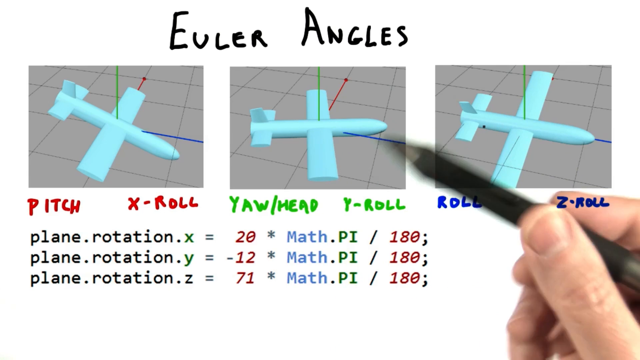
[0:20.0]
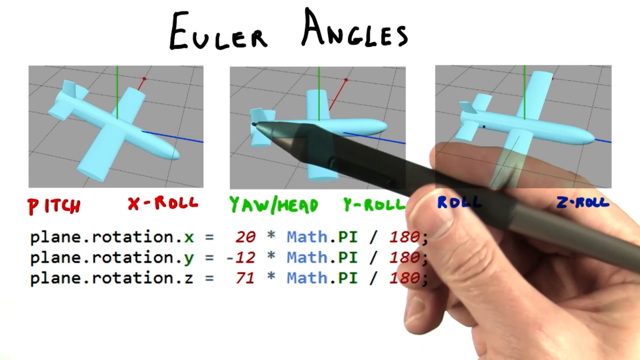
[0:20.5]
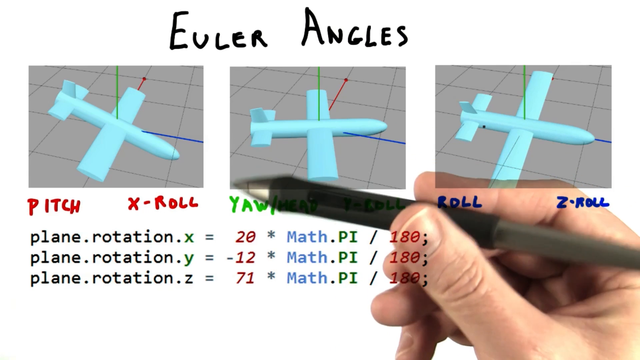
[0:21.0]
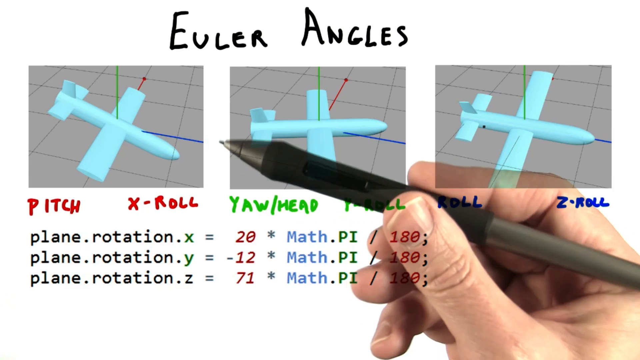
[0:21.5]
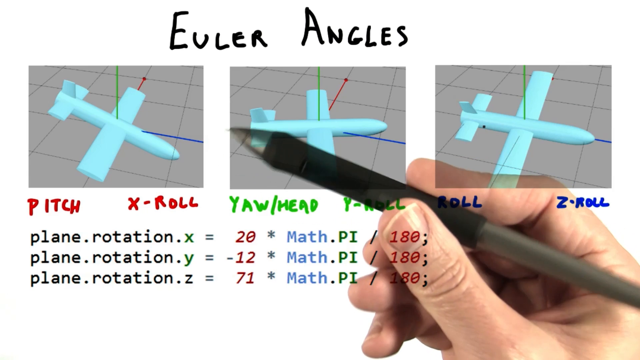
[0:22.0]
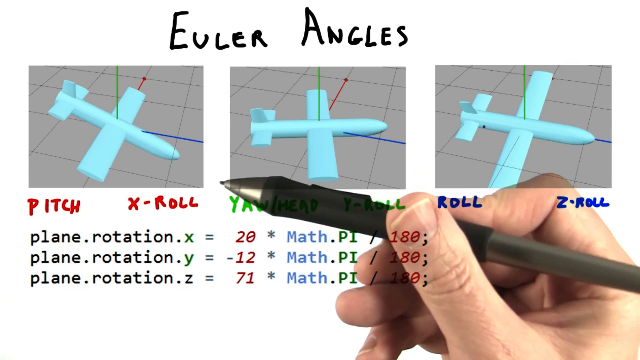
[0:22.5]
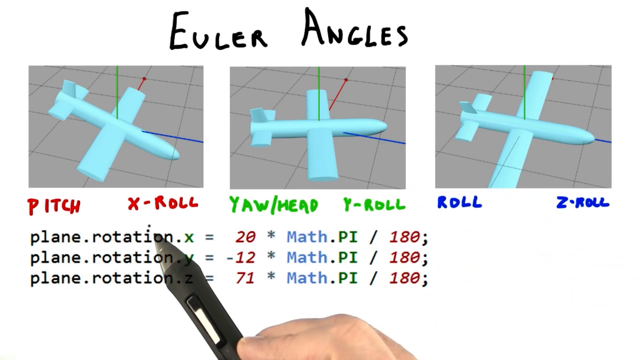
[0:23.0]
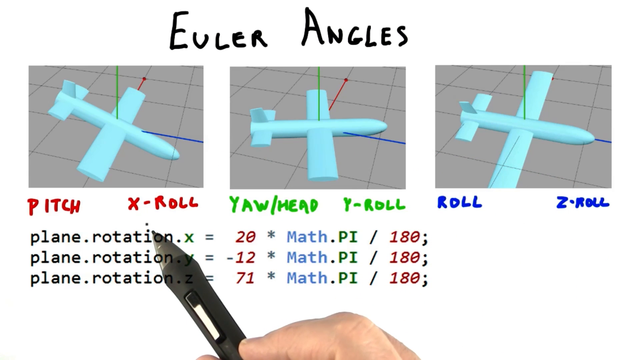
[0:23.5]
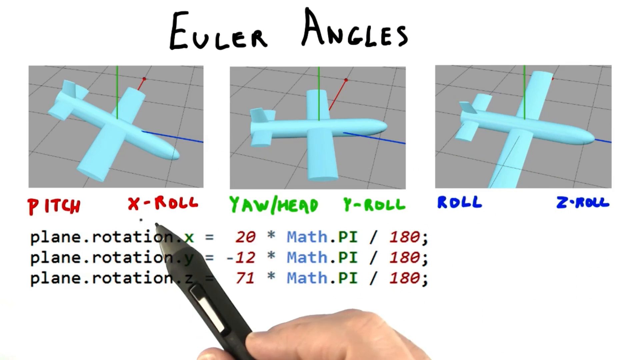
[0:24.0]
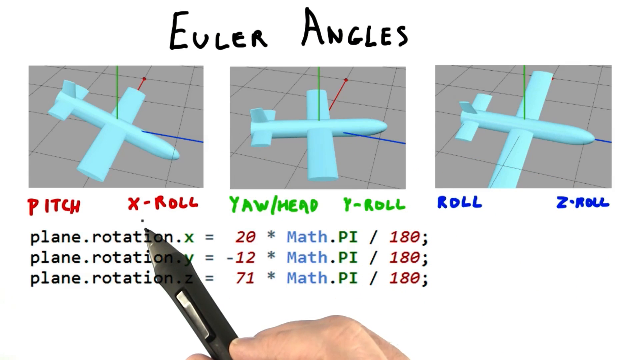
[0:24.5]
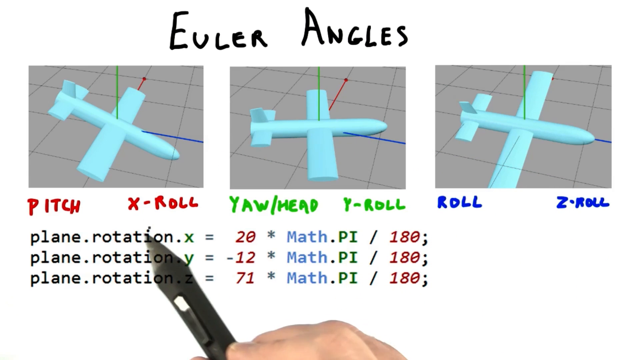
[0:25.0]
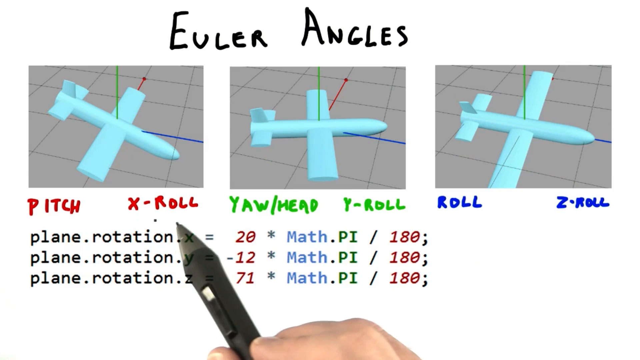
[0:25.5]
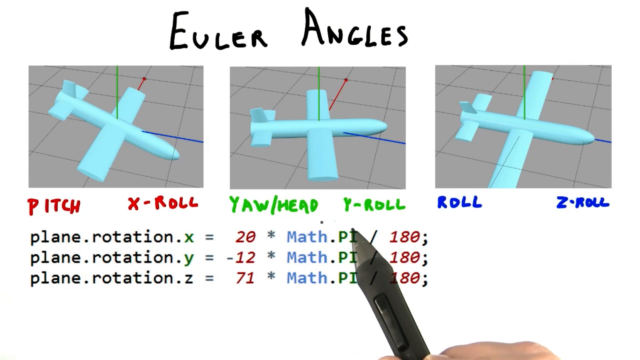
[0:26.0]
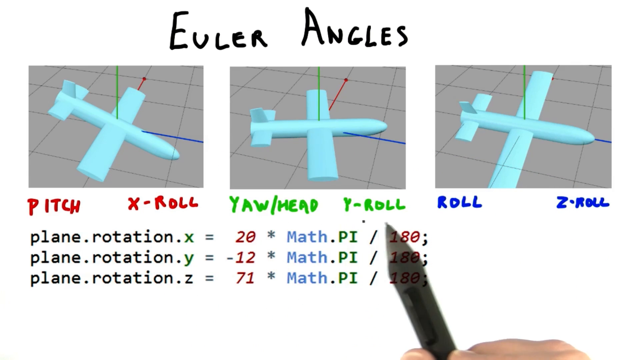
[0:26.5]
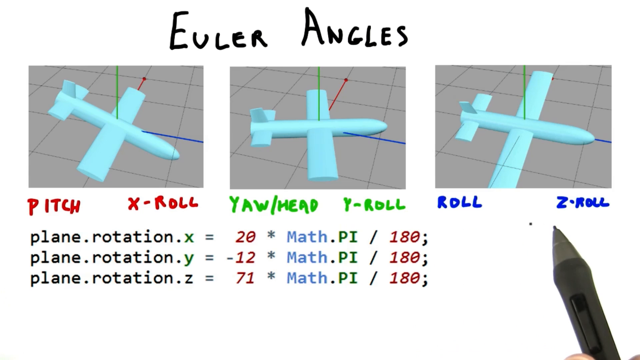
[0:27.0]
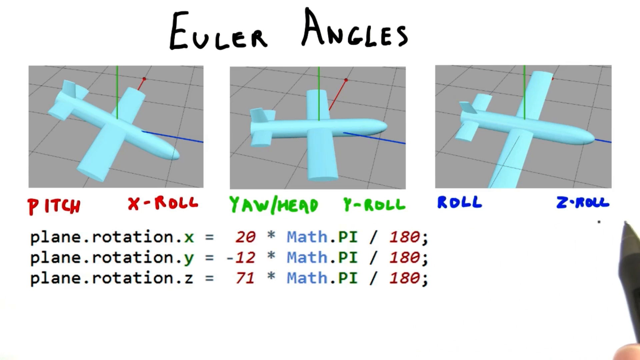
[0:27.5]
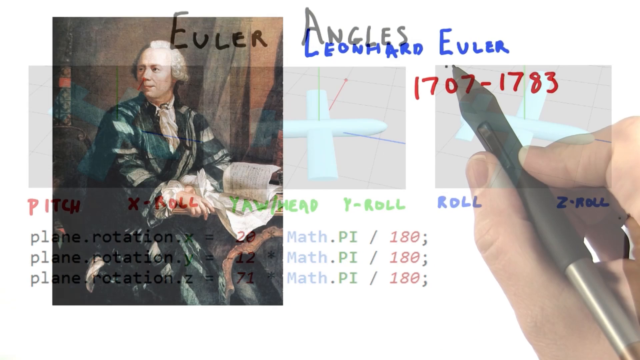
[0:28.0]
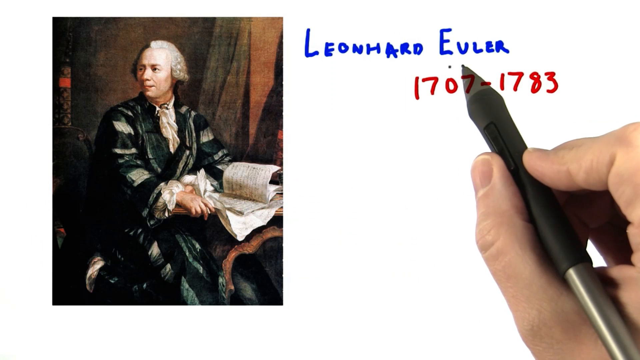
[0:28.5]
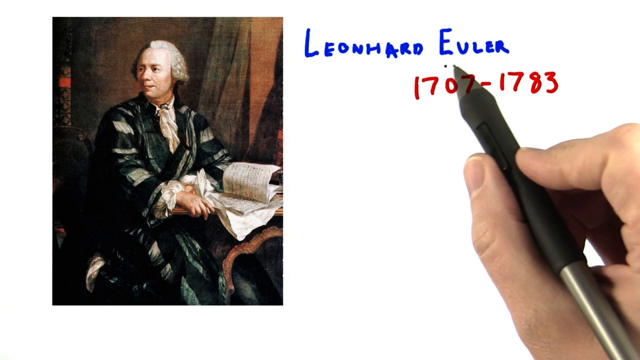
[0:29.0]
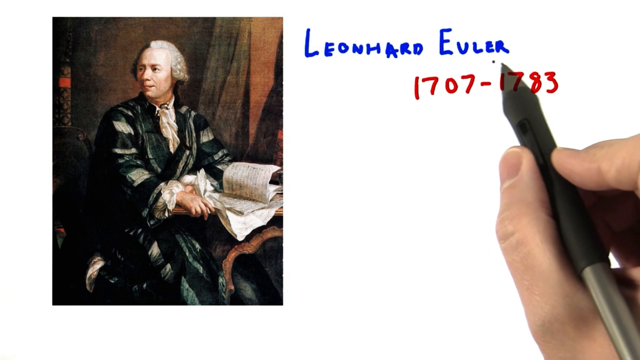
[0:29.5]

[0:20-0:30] The white screen has "Euler angles" written in black at the top, and beneath it three squares side by side, each containing a baby blue shape of an airplane. Under the first square, in red, is "pitch", with "X-roll" to its right. Under the second is "yaw\head", with "Y-roll" to its right, in green. Under the third box, in blue, is "roll", with "Z-roll" to its right. Beneath all three are the lines "plane.rotation.x = 20", "plane.rotation.y = -12" and "plane.rotation.z = 71".